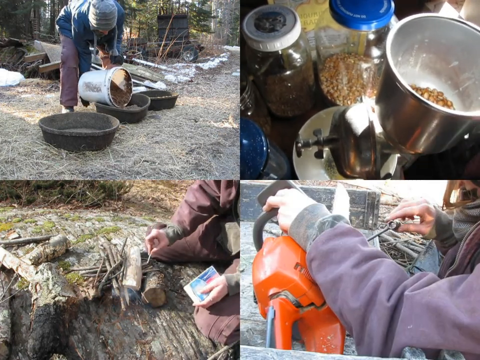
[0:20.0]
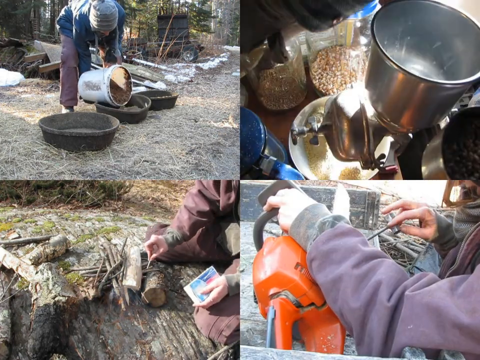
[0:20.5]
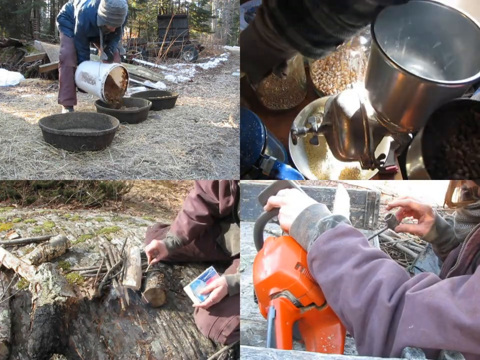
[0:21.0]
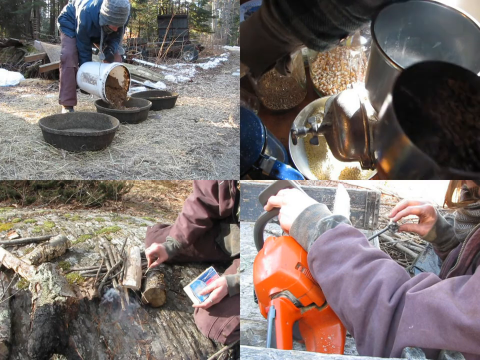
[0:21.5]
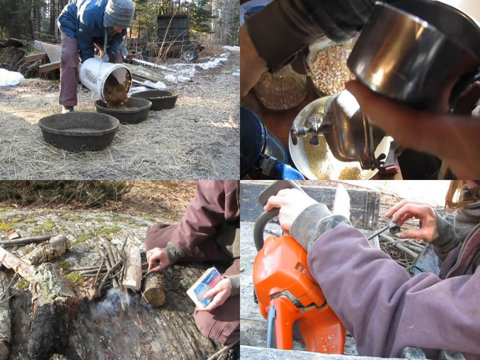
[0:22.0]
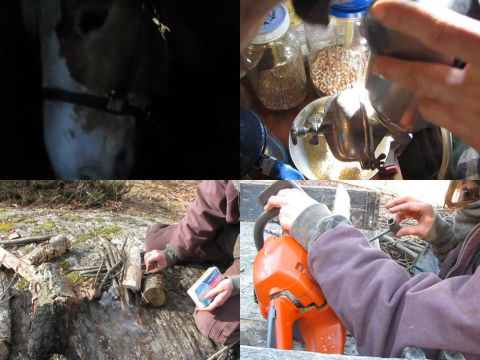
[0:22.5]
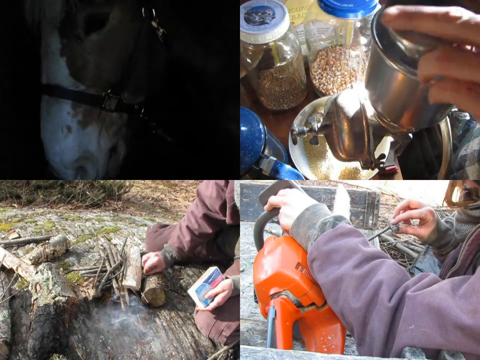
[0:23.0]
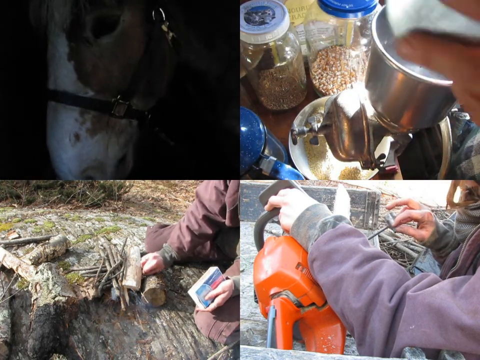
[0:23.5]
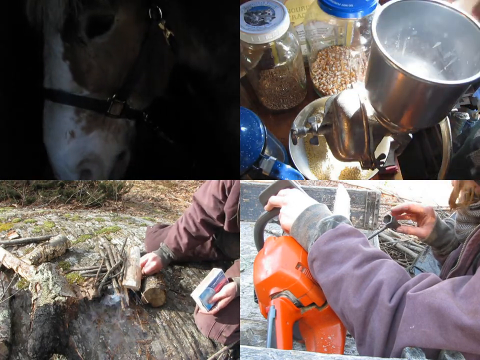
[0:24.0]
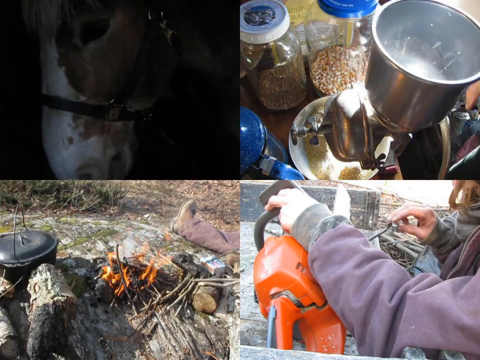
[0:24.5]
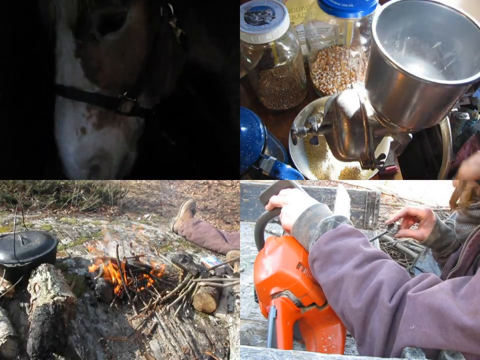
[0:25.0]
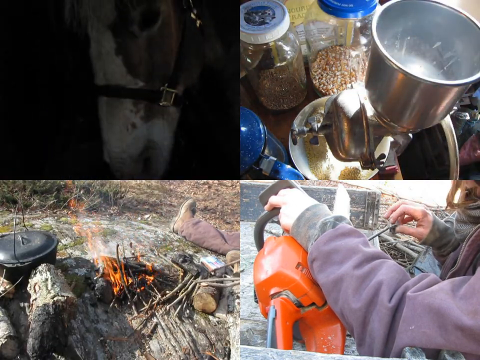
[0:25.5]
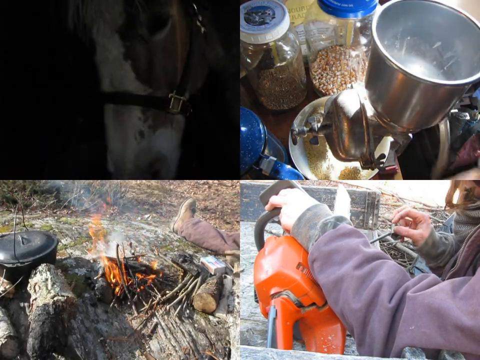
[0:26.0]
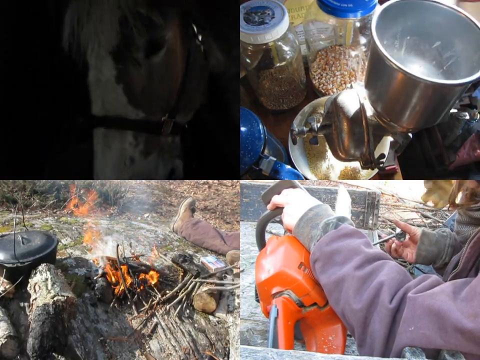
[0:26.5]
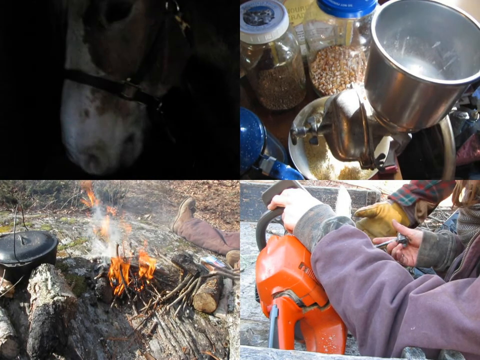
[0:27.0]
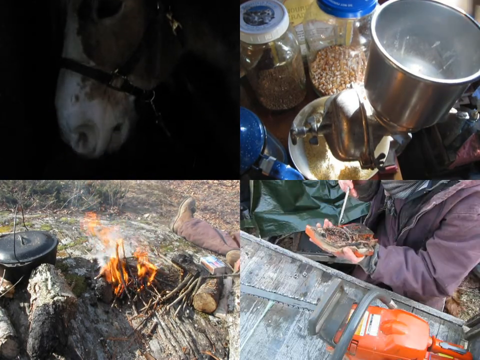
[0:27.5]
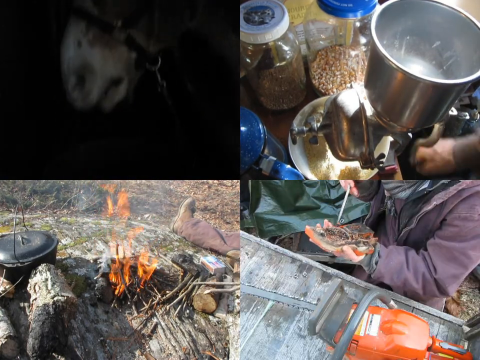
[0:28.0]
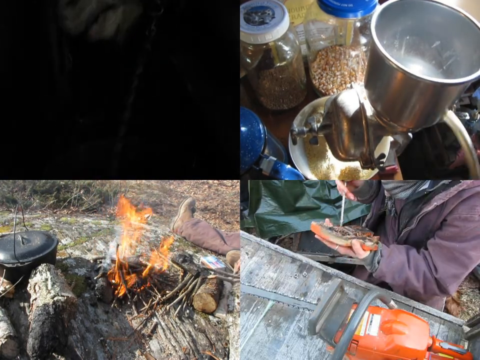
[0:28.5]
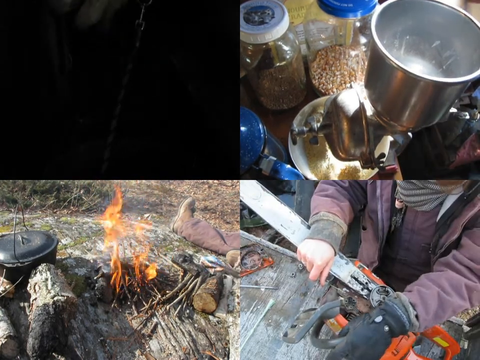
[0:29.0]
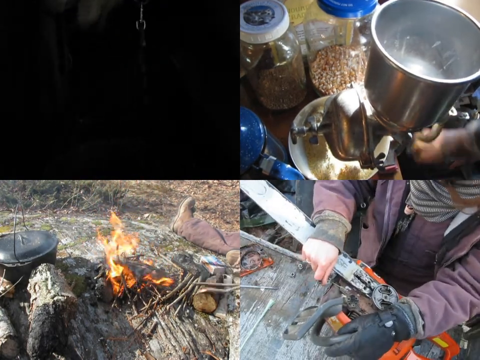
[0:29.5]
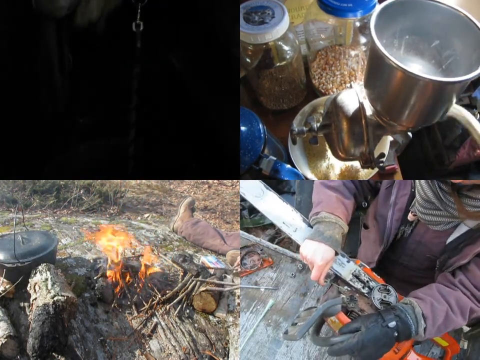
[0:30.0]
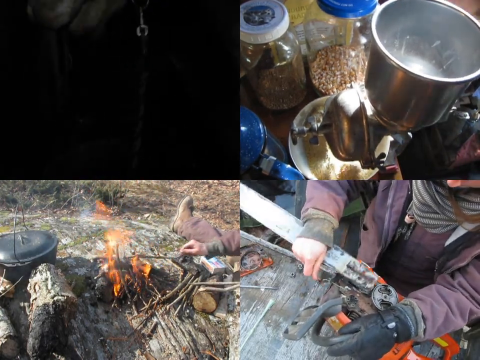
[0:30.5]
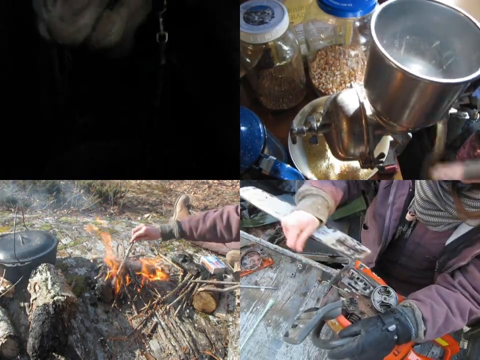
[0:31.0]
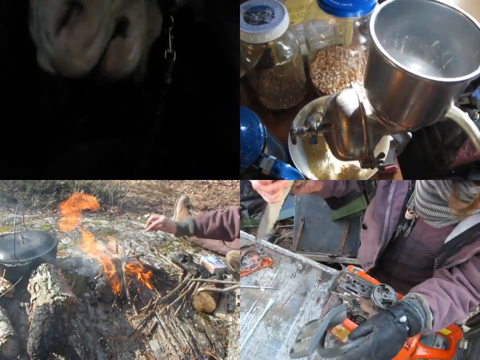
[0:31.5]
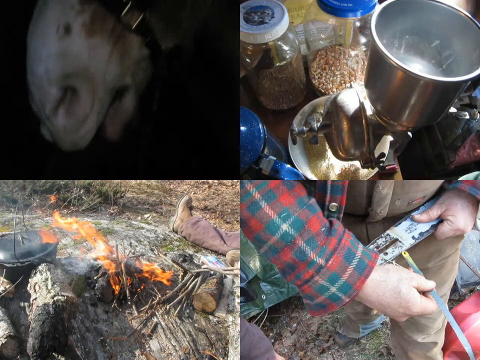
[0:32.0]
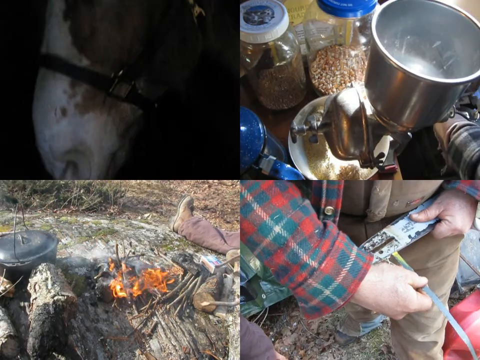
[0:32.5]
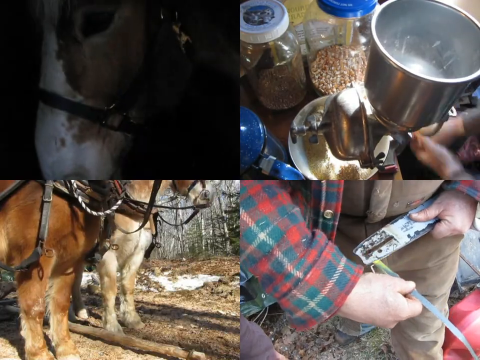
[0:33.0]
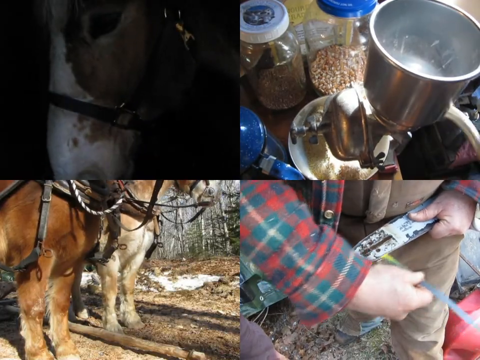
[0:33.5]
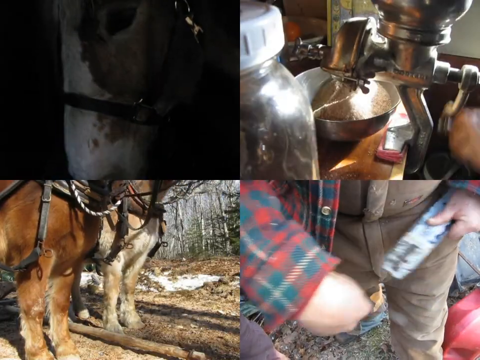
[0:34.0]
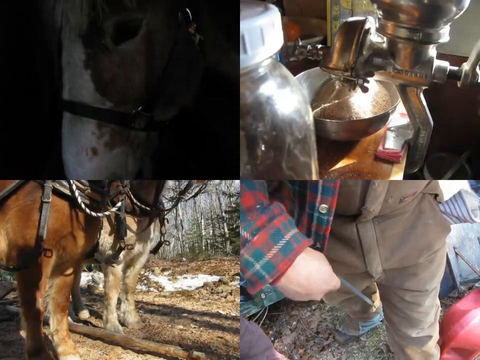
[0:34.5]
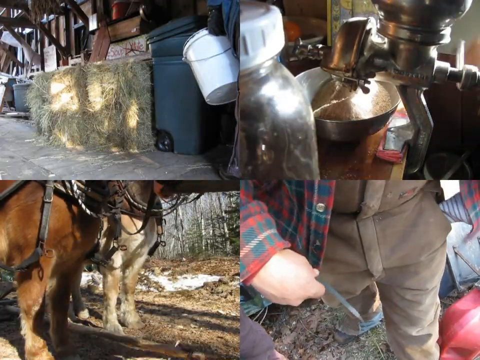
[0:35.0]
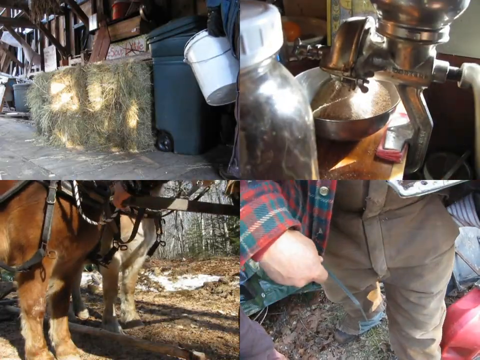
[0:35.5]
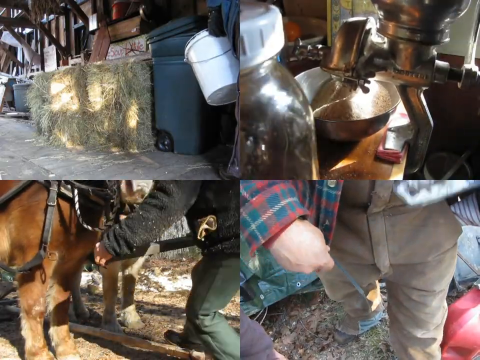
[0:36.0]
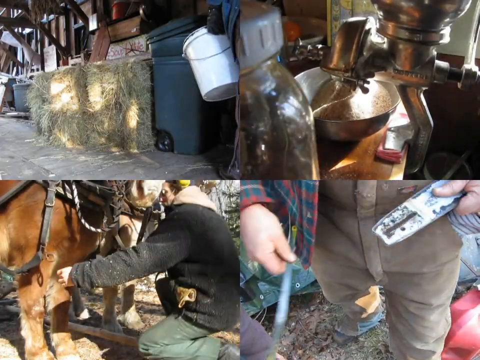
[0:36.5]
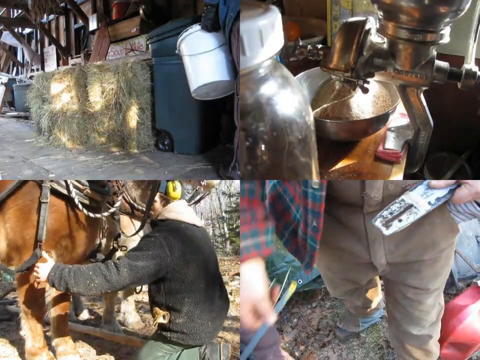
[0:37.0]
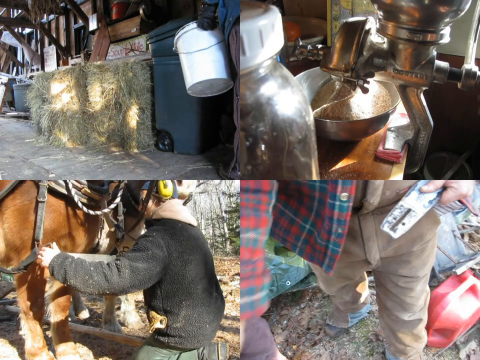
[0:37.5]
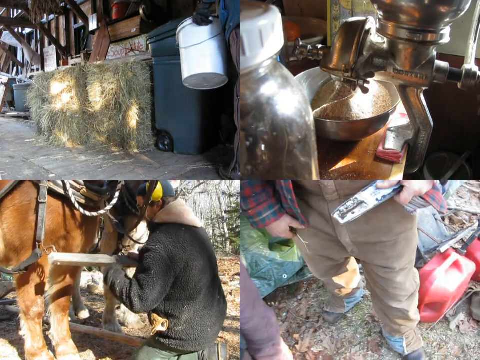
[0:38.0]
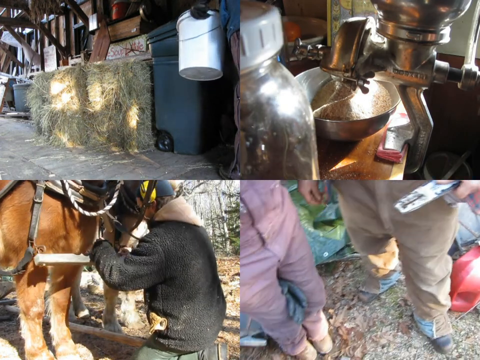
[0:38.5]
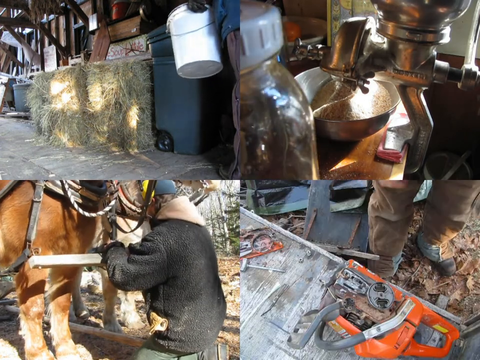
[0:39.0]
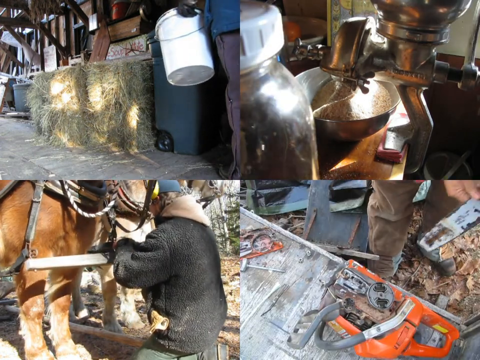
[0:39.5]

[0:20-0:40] In the top left, the person in the blue jacket pours something into three large bowls. The top right starts with the popcorn kernels in the silver pot. In the bottom left, someone with the smaller pieces of wood lights a match to start a fire, and in the bottom right a man in a purple sweatshirt holds some kind of tool next to the chainsaw, possibly trying to repair it. The top right then switches to a nighttime view of the horse eating. The pot video shows someone turning a handle next to the pot. In the bottom left the fire is completely started, a black kettle with a handle is sitting next to the fire, and someone's foot is visible as they appear to add more sticks to the fire. In the bottom right, the man looks like he is changing out the blade or repairing the chainsaw. The top right switches to what appears to be the interior of a barn with stacks of hay bales. The pot scene turns out not to be popcorn: the person looks like they are grinding the corn kernels, perhaps into cornmeal, and it is now a powder. The bottom left then shows someone tending to the horse, and the bottom right continues to show someone repairing the chainsaw.